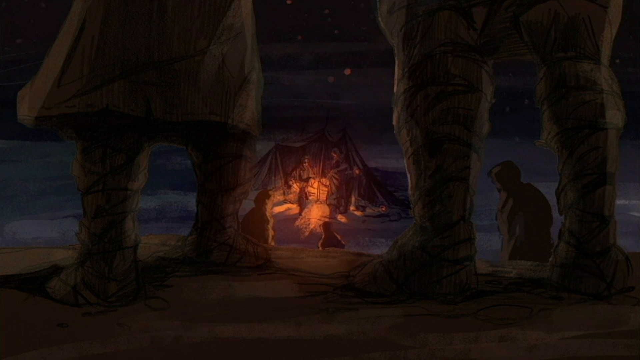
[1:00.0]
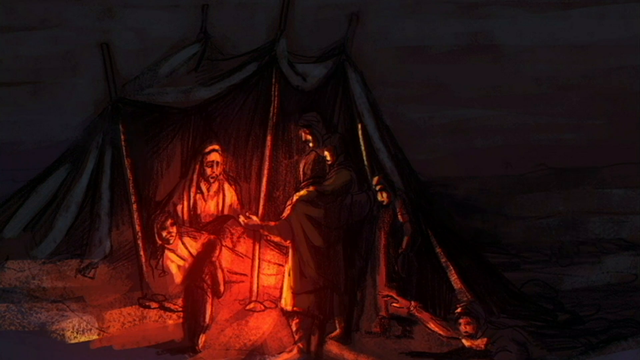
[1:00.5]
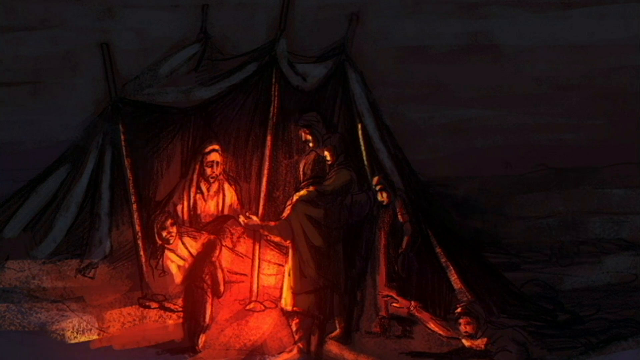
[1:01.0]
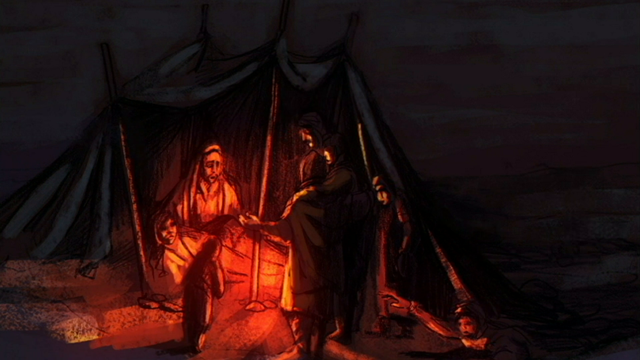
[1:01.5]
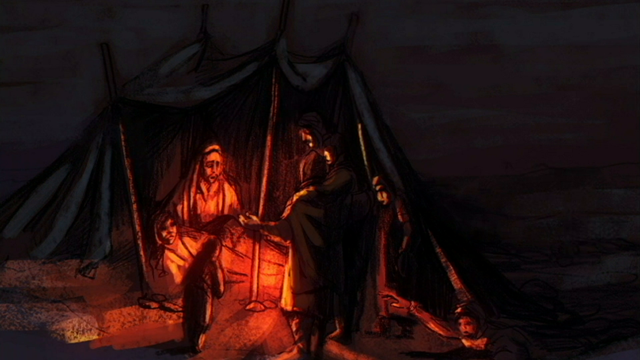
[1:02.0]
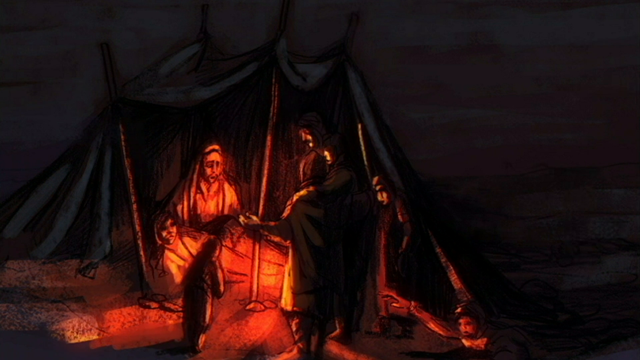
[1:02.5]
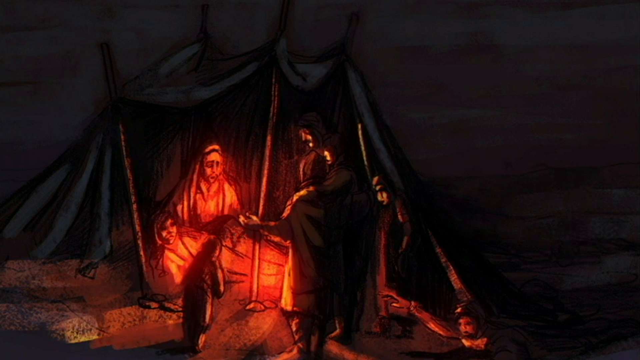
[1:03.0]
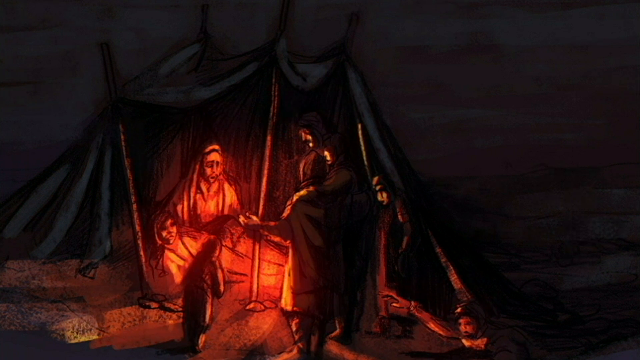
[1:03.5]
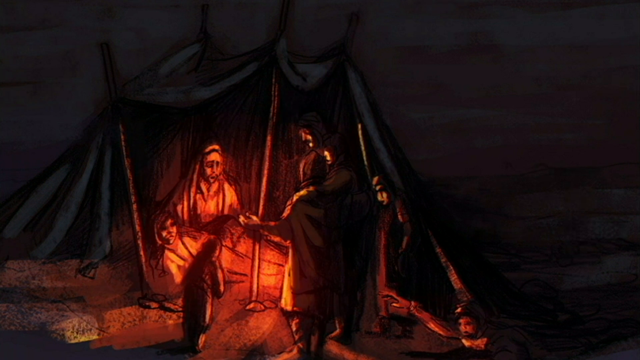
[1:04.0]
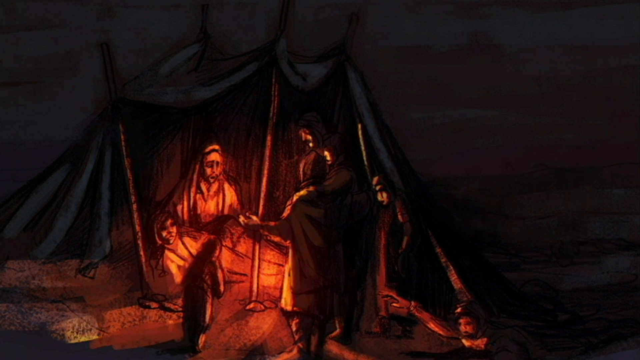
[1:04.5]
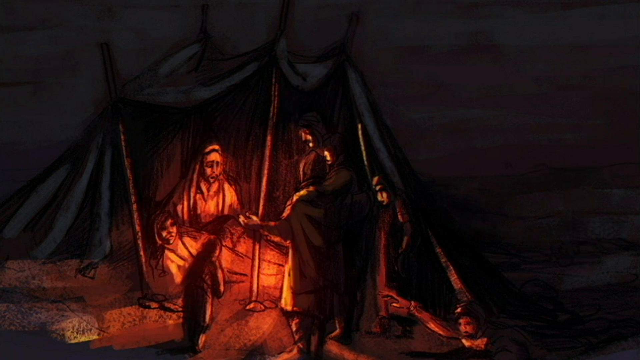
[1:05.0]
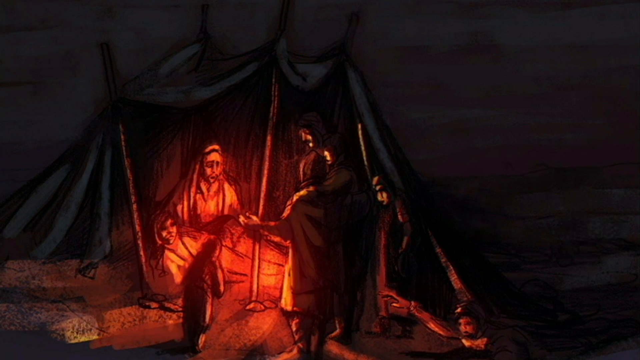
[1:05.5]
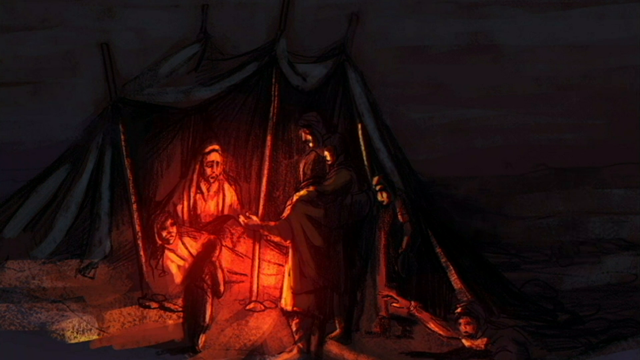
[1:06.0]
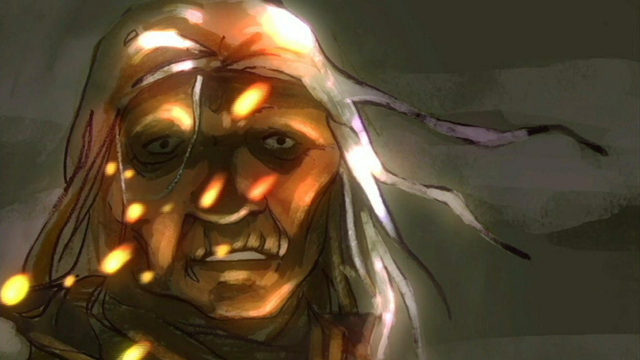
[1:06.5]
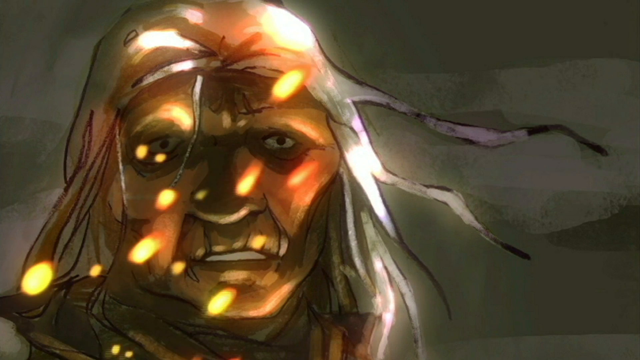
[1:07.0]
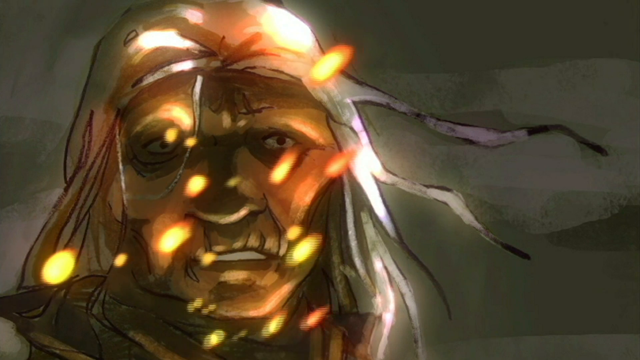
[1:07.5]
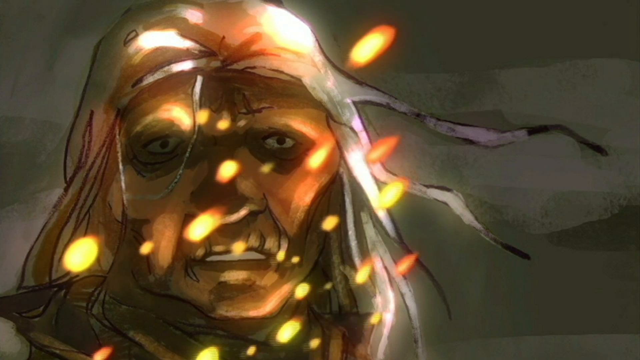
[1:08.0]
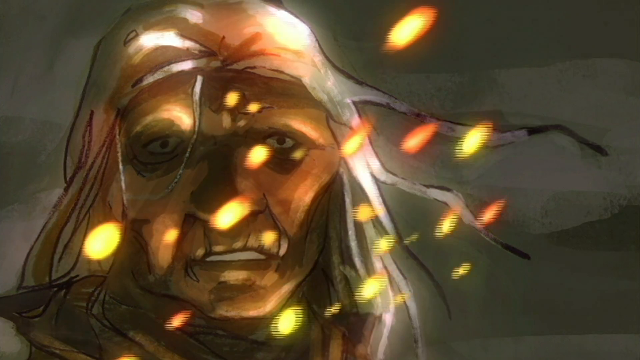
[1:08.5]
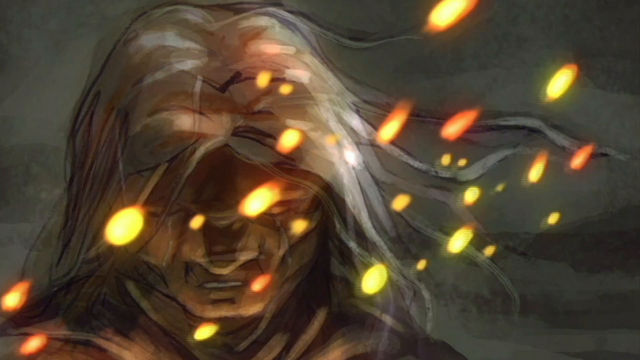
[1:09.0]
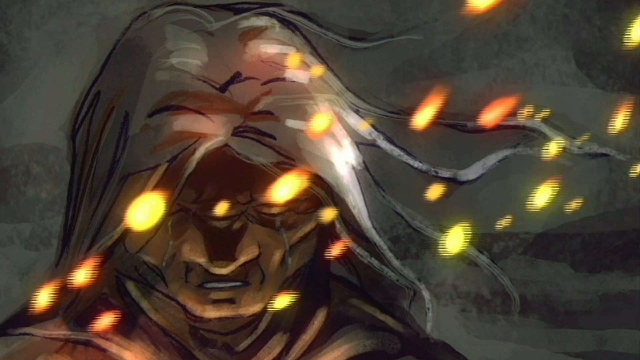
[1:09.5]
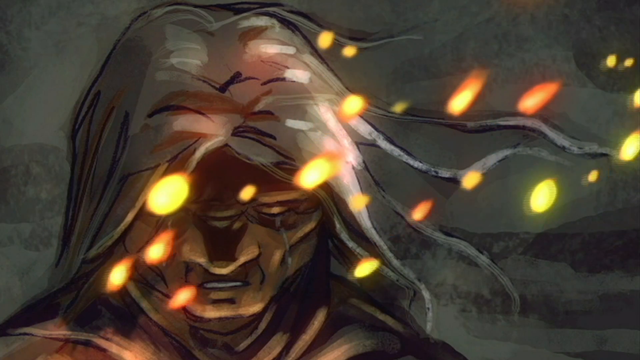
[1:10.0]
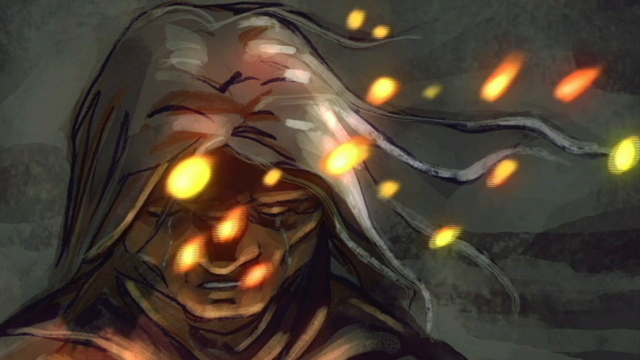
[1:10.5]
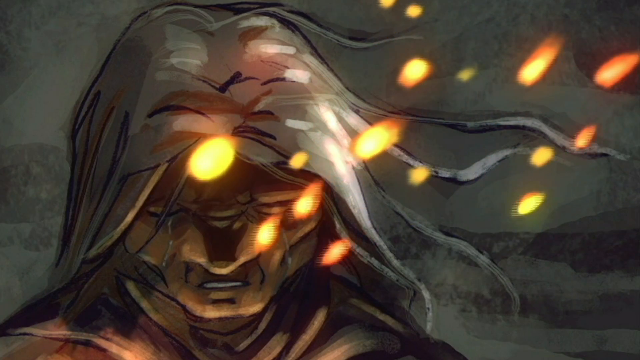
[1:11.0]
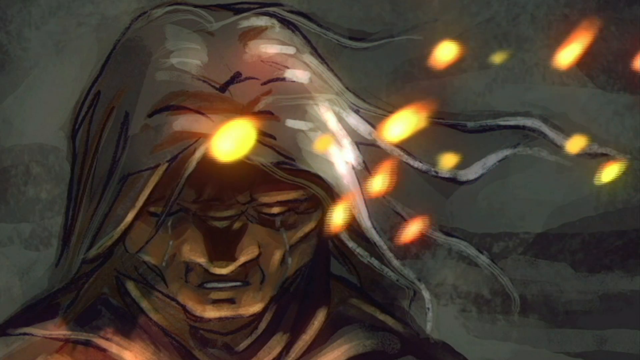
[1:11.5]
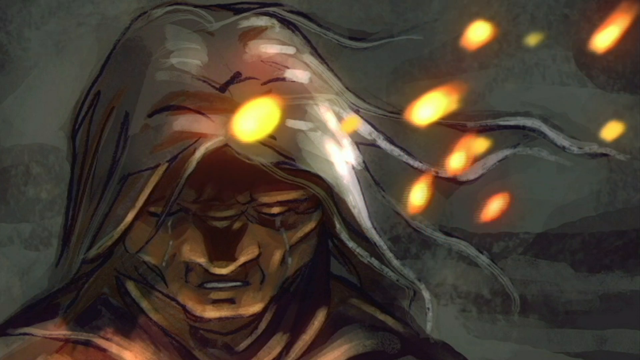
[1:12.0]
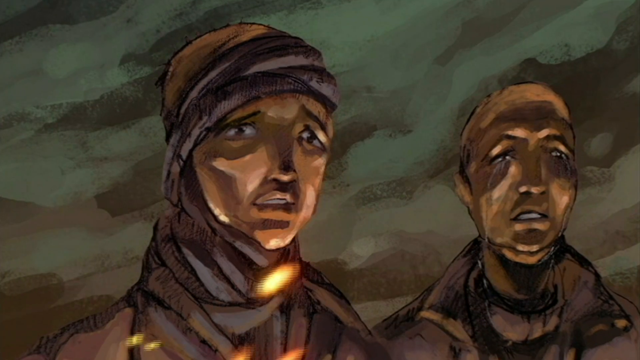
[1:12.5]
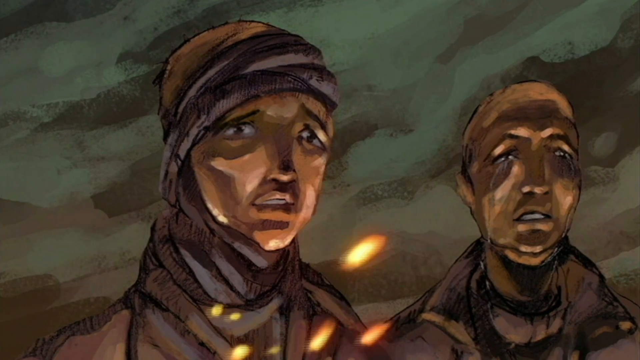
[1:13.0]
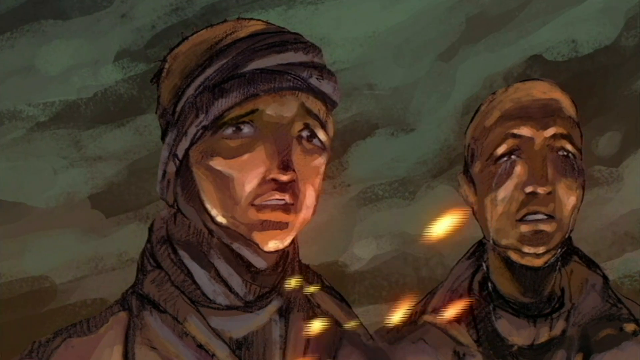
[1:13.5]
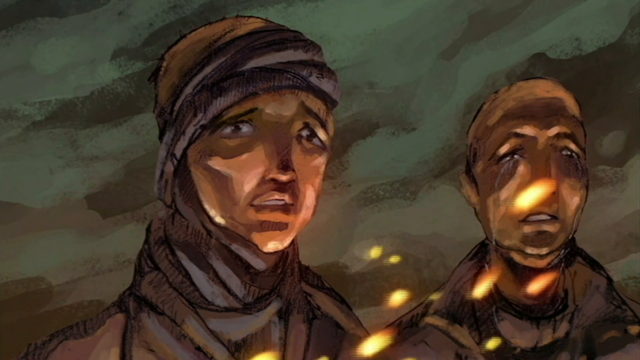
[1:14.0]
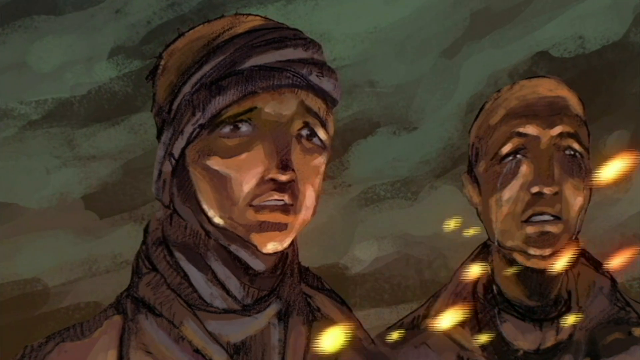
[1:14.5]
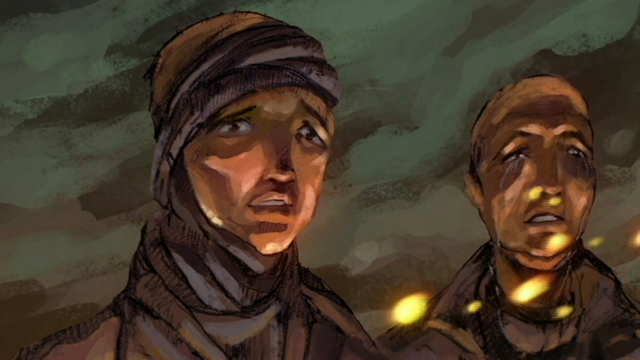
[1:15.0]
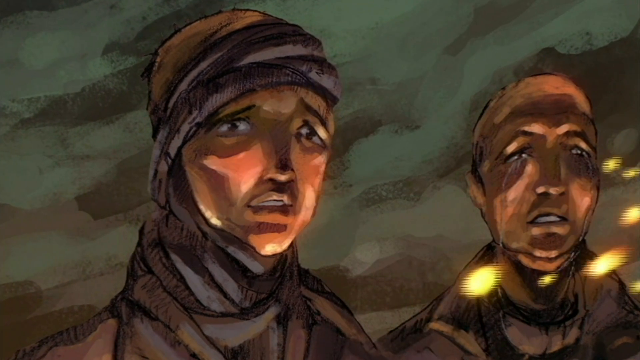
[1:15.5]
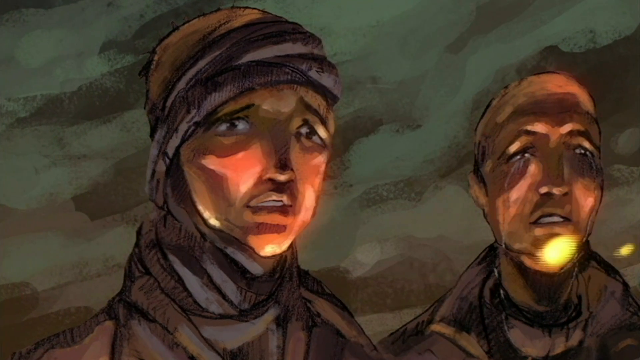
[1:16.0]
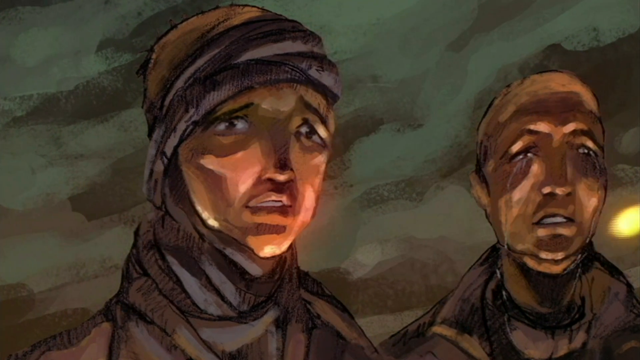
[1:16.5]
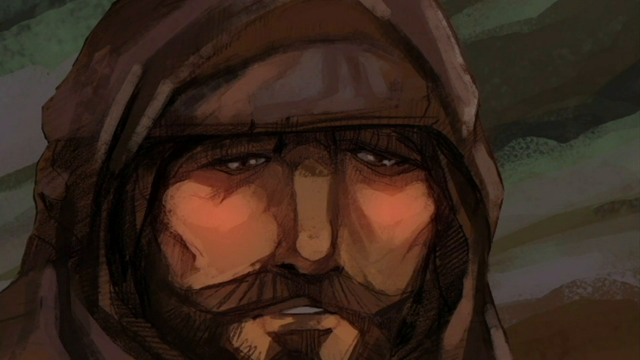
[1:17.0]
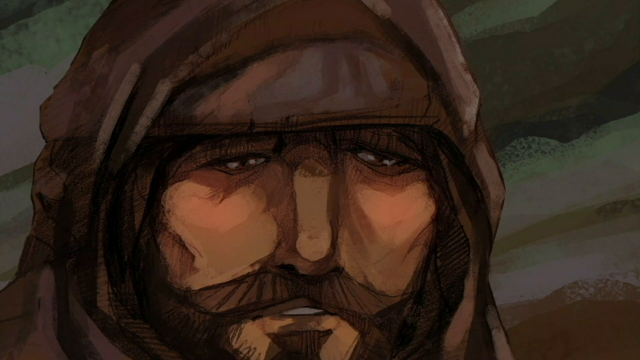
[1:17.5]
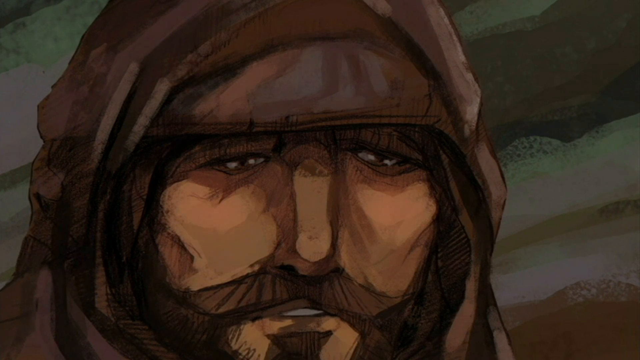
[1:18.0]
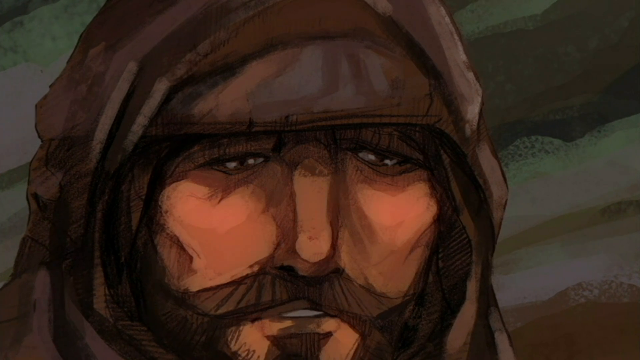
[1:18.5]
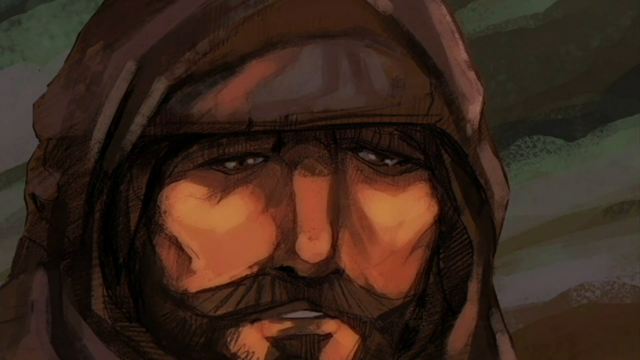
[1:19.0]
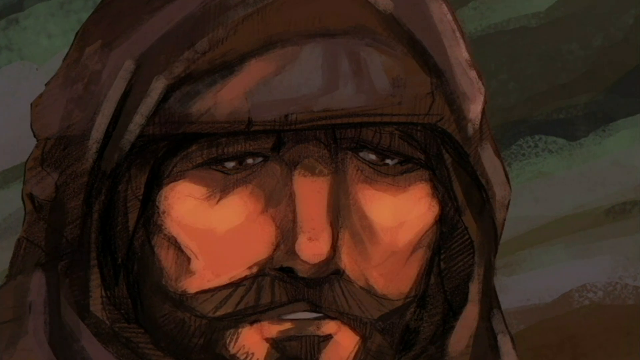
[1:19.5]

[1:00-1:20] The view zooms in on the fire. There is a stake to the left and a big long stick poking through the top of a hanging cloth whose front end is open. A person sits on the left side with a person lying down in front of them, what looks like a small child in front, and a couple of people standing around on the right side. The center is lit up yellow and orange, reflecting off the people, especially those on the left side, and it turns a brighter orange, then dims and brightens repeatedly. Next is an older Native American woman with white hair, with little white circles and yellow circles coming up around her face, almost like orbs, going up to the right and changing to red. Her head then tilts forward and tears run down her face. Then there are a couple more people: the one on the left has a wrap around their head and looks sad, and the one on the right looks sad and is crying. The view zooms in on them a little. Then there is a man with a mustache looking very weary and worn, as the view slowly moves in on him.